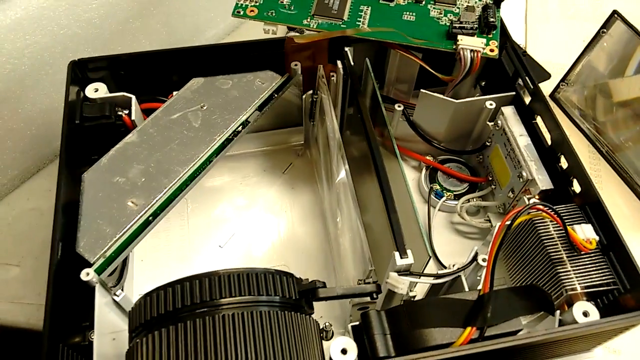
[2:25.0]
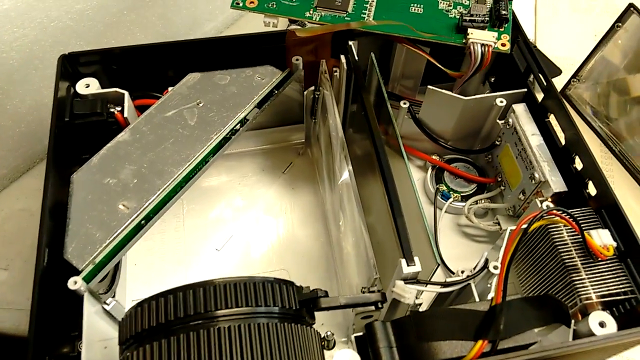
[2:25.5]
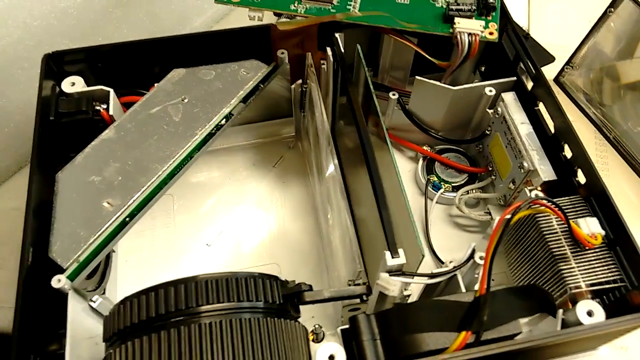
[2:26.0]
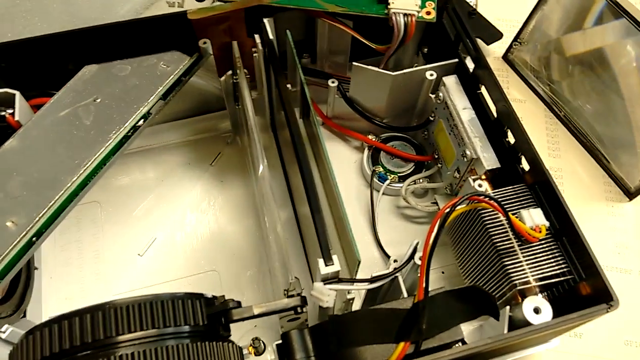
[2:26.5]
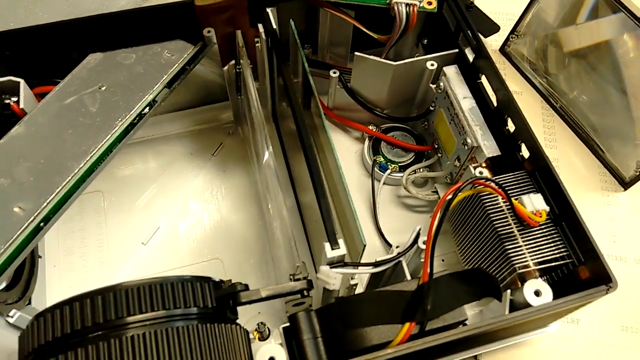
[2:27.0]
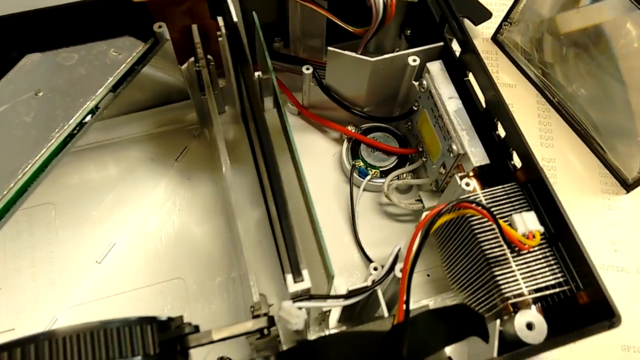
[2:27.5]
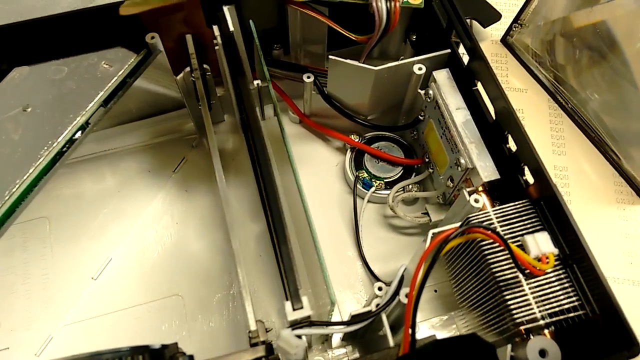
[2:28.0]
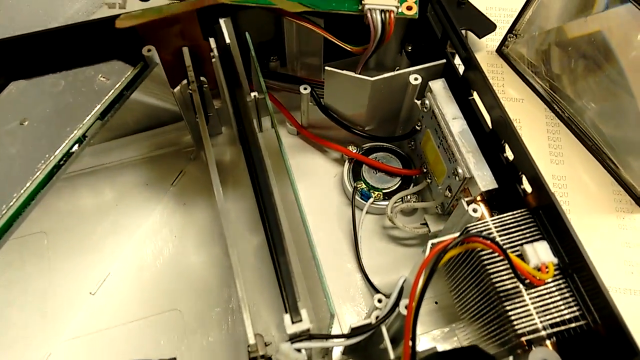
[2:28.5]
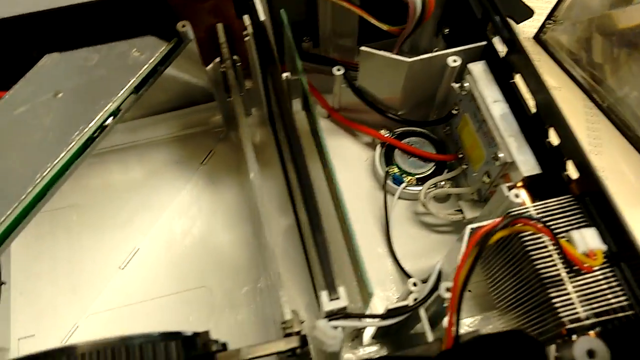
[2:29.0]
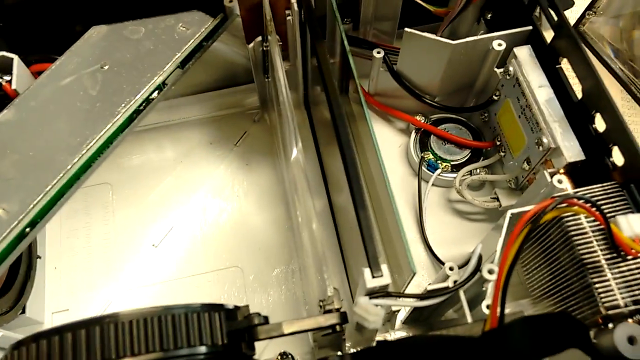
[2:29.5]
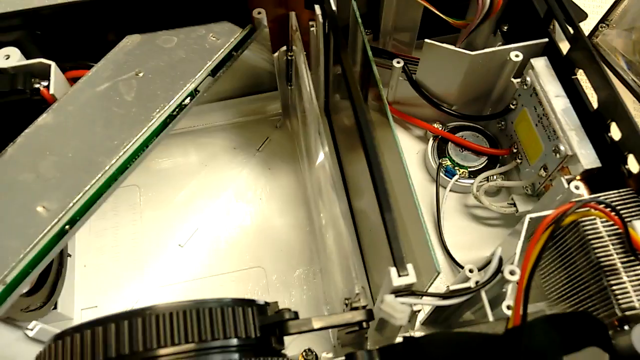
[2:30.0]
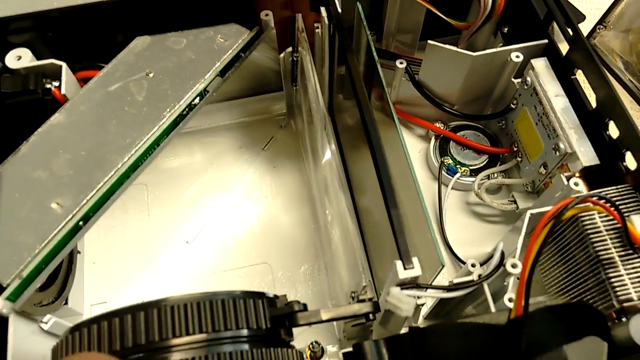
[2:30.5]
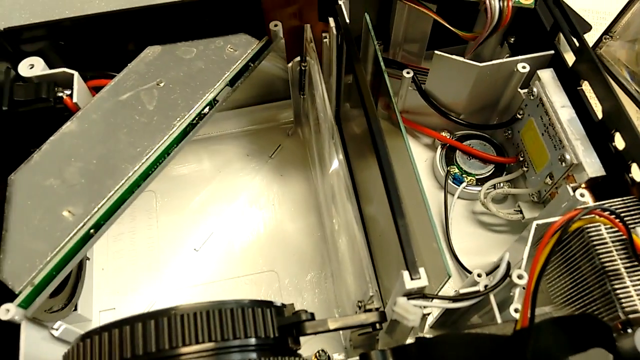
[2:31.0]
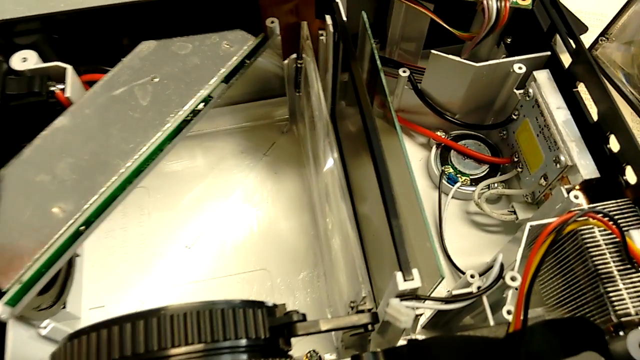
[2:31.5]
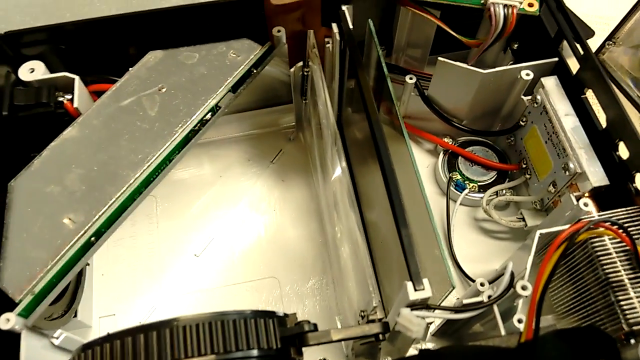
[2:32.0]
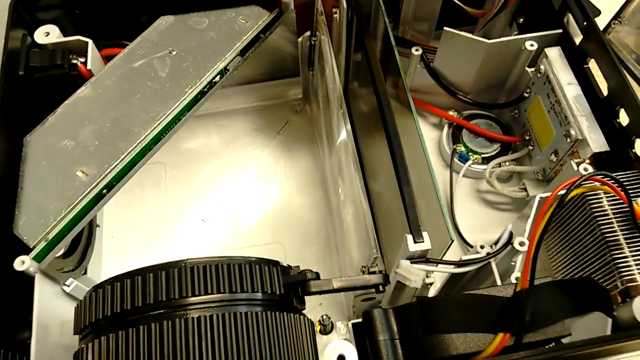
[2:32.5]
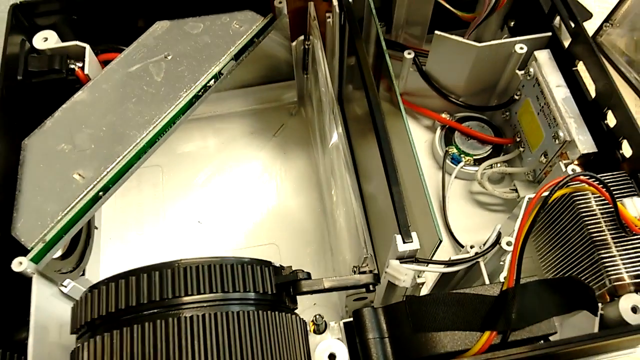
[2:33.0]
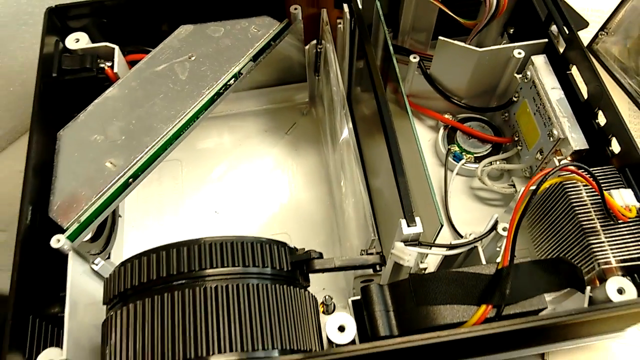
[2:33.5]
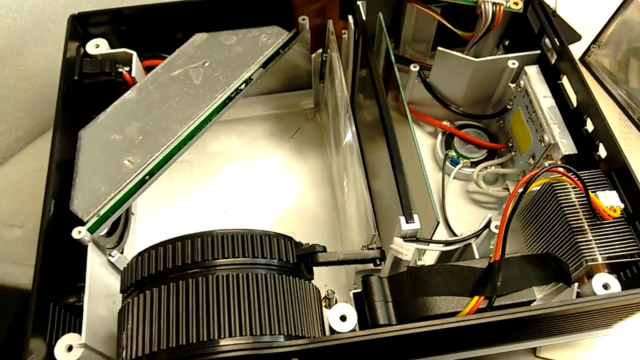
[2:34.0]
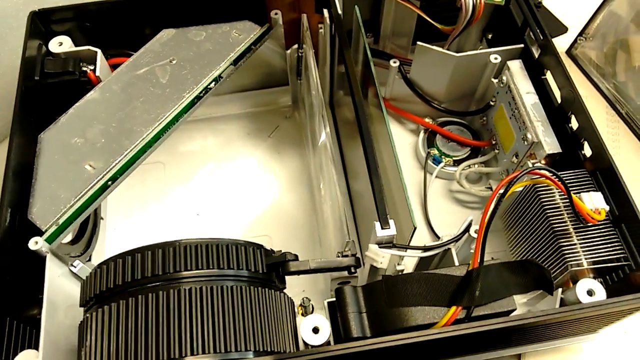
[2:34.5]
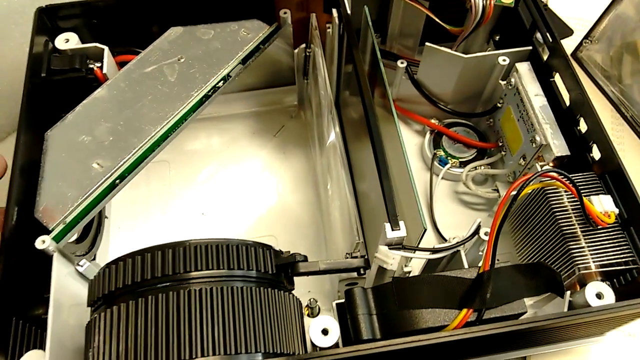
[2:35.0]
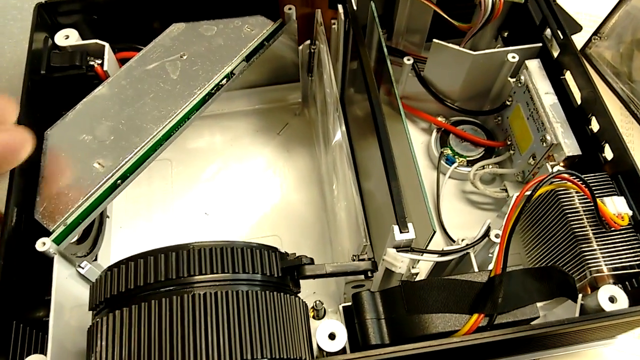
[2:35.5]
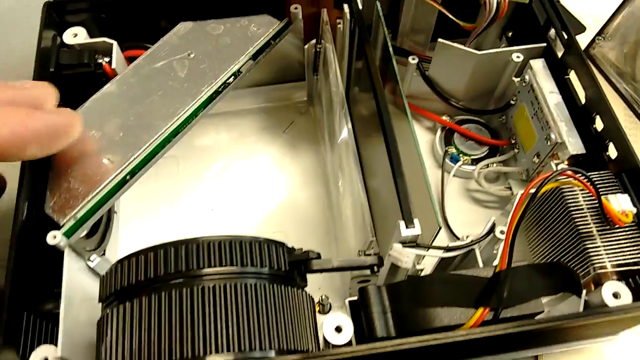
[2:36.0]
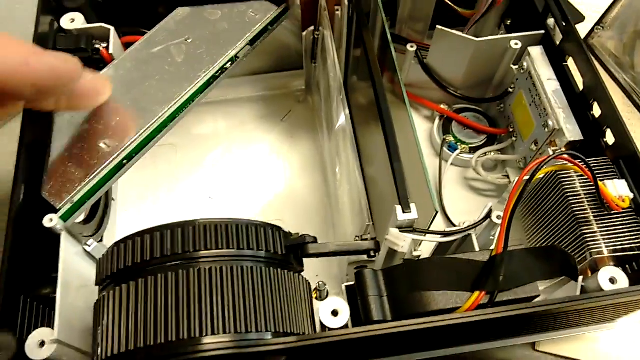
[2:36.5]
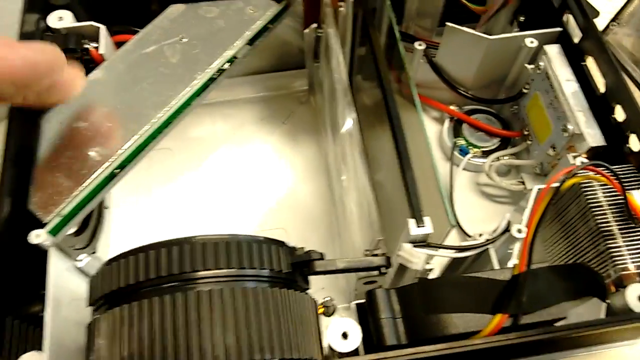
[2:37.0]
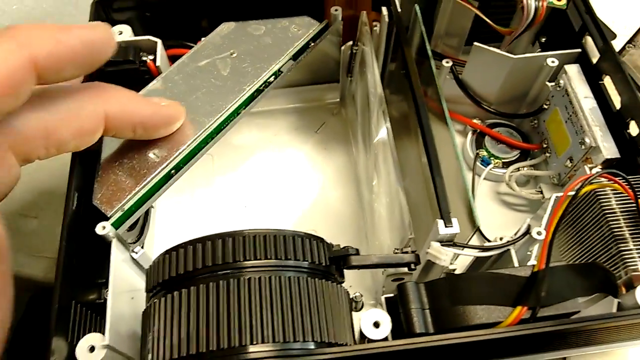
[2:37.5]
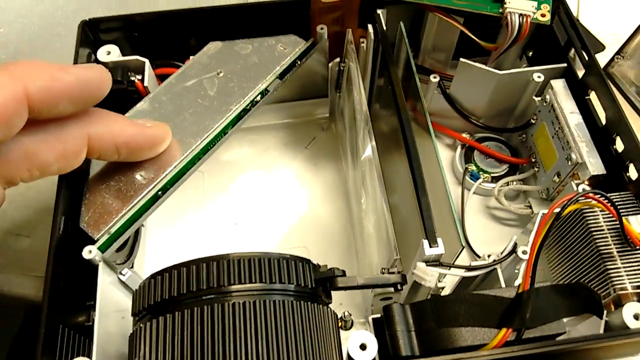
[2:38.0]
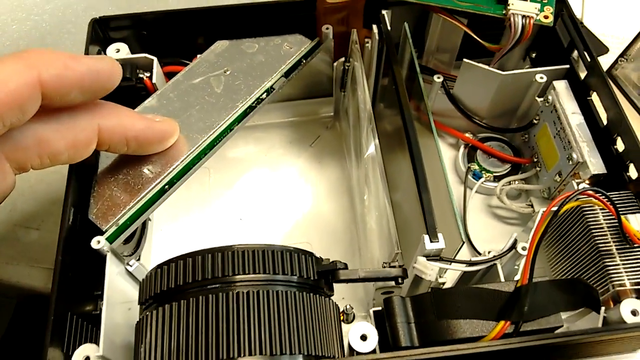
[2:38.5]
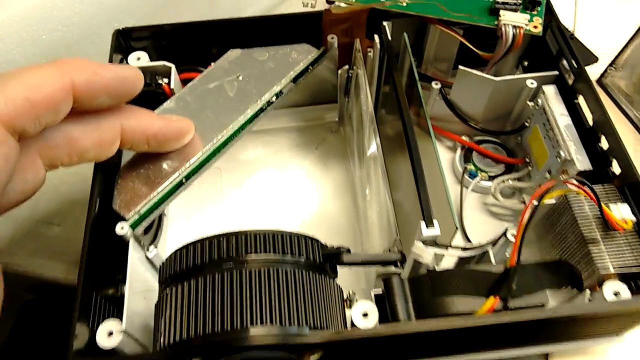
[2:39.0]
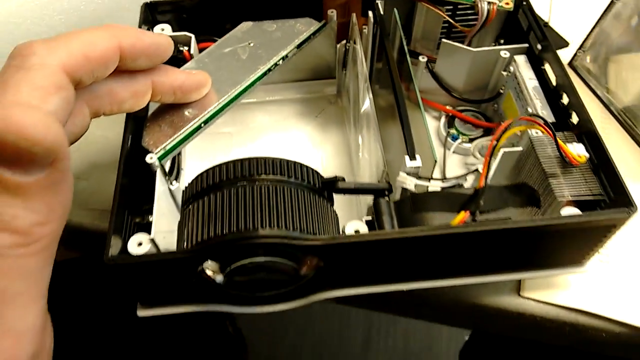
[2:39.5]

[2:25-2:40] The box is shown completely, with the camera zooming in and out and showing all of its sides and what is inside on the top. Then the Caucasian male hand appears and touches items on the left-hand side of the box. On the outside of the right-hand side of the box is the triangular lens that was in his hand before. His focus is on the front of the box and the metal piece on the top left that goes across the box. No papers are shown, nothing other than the triangular lens on the right-hand side of the box.